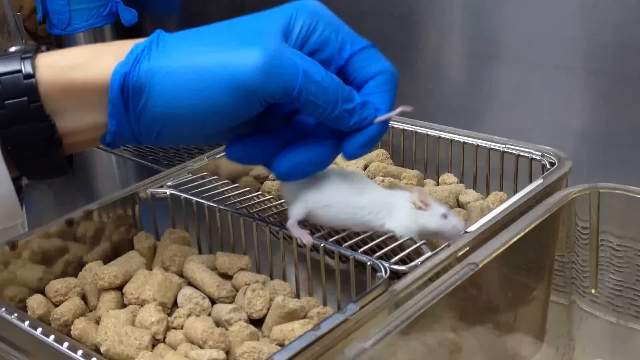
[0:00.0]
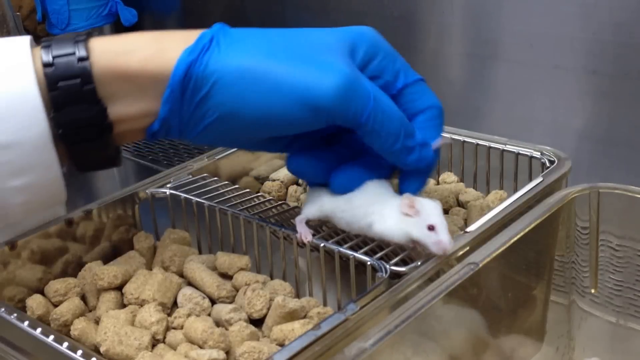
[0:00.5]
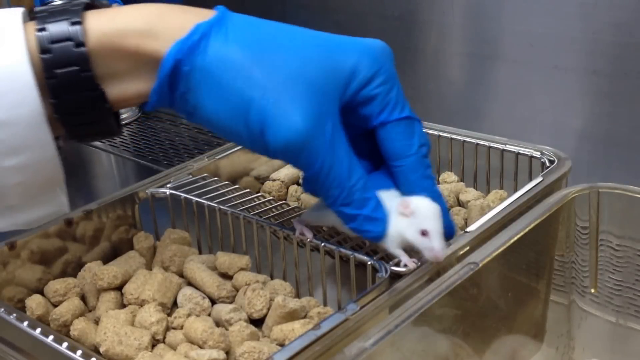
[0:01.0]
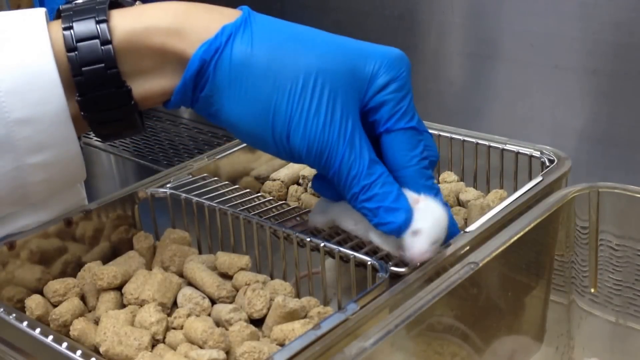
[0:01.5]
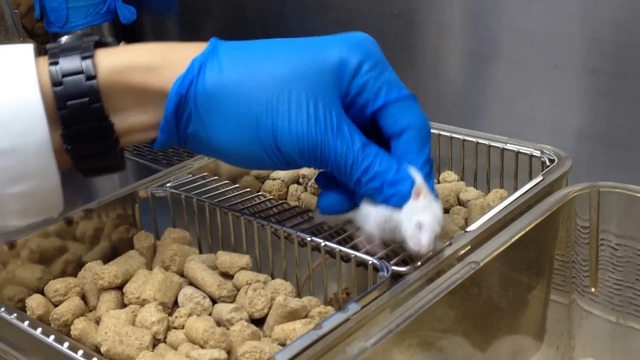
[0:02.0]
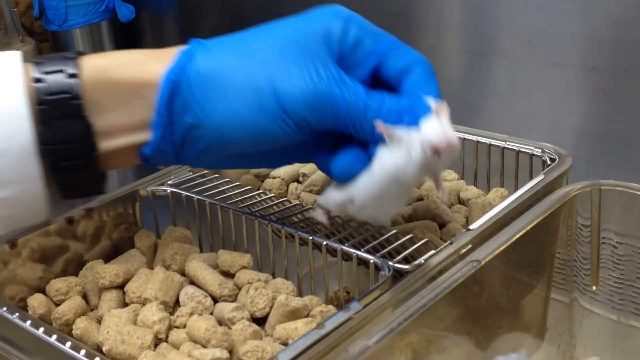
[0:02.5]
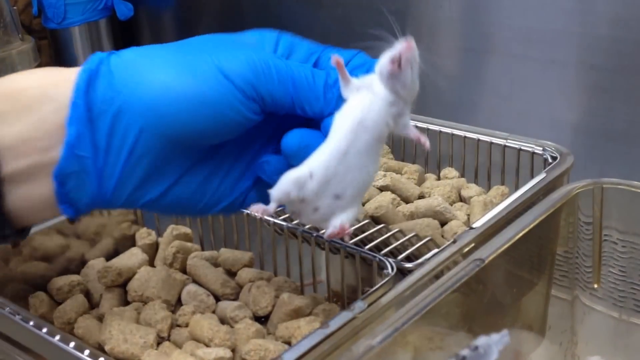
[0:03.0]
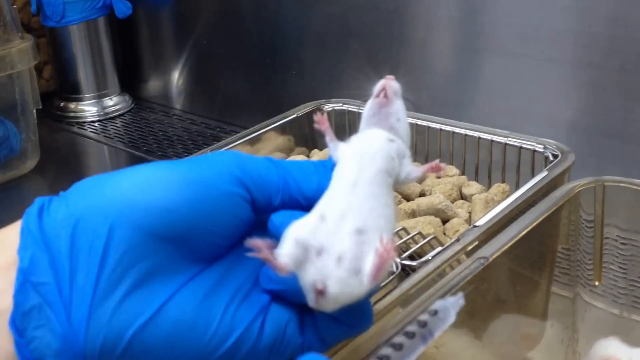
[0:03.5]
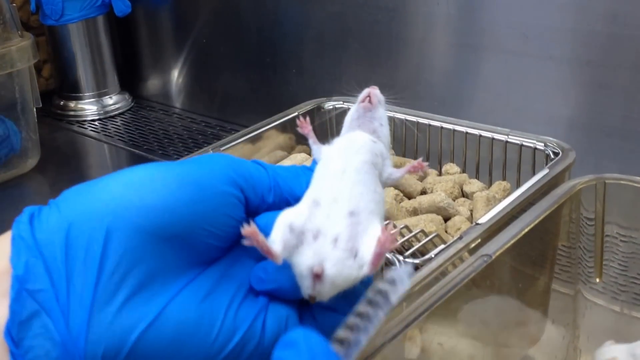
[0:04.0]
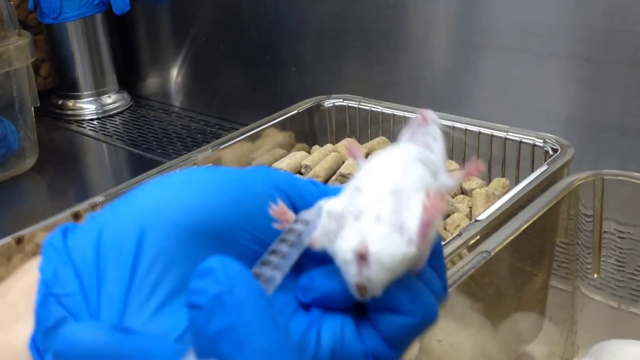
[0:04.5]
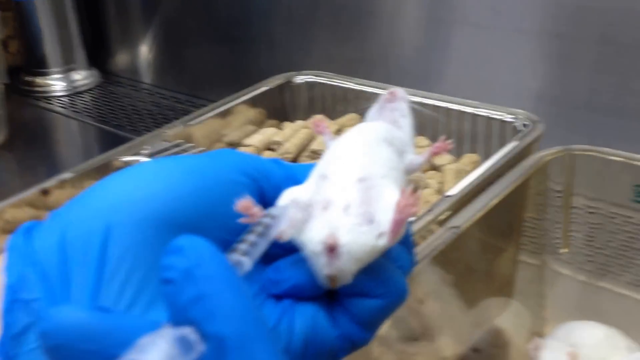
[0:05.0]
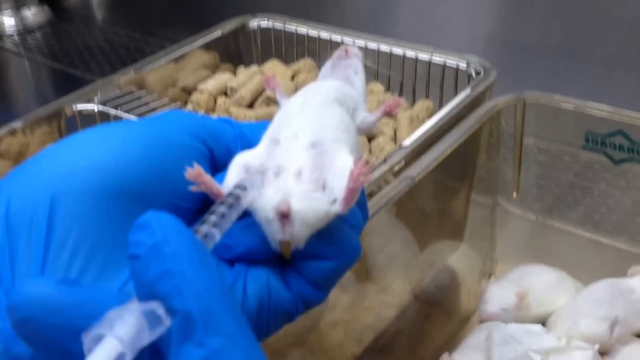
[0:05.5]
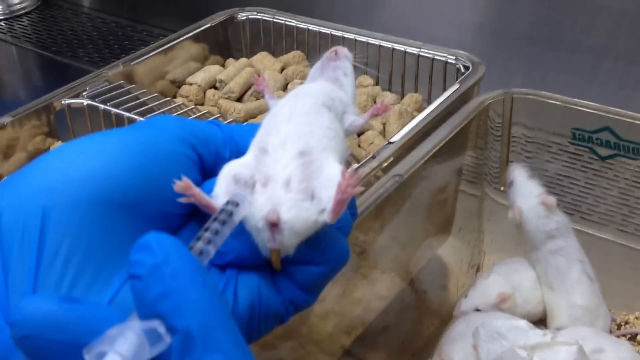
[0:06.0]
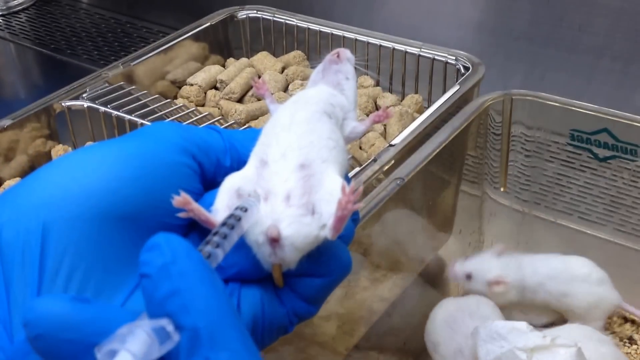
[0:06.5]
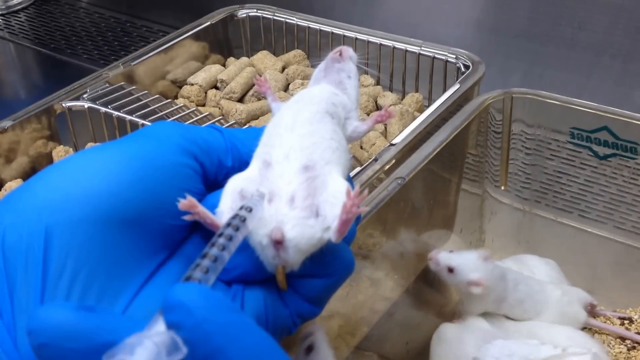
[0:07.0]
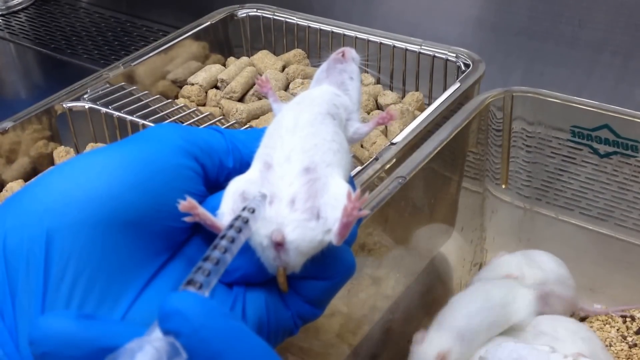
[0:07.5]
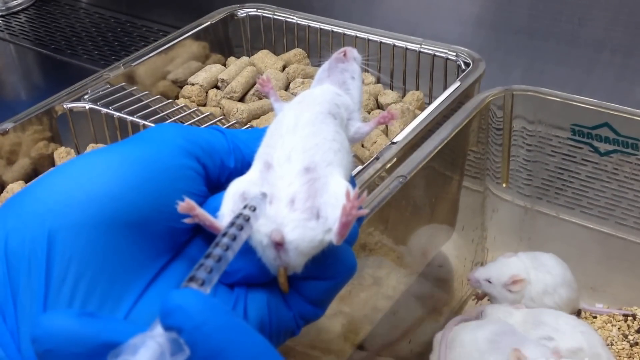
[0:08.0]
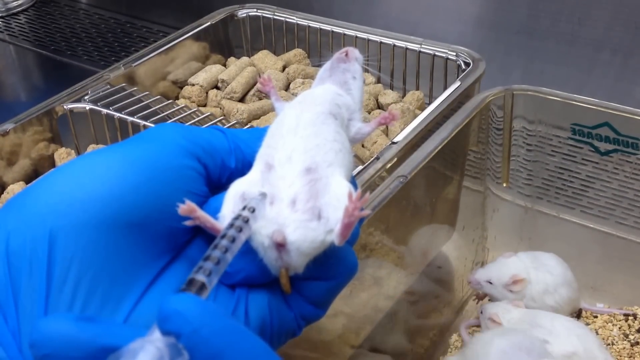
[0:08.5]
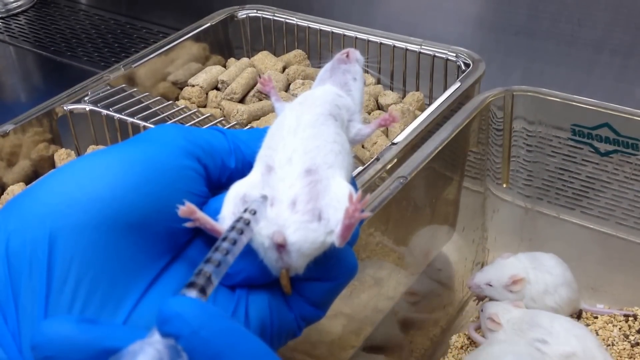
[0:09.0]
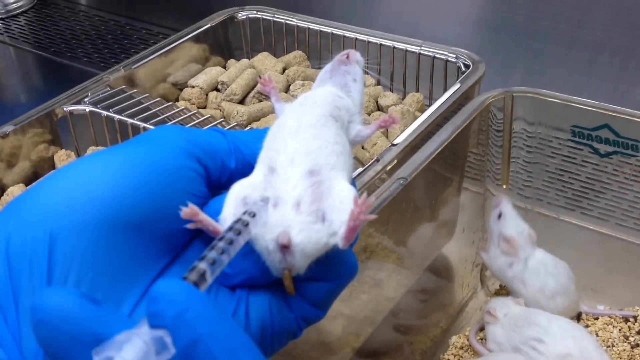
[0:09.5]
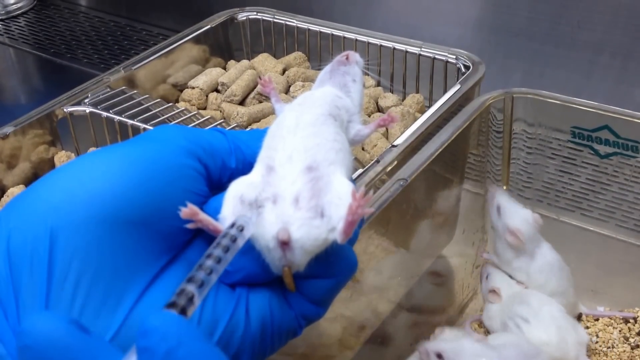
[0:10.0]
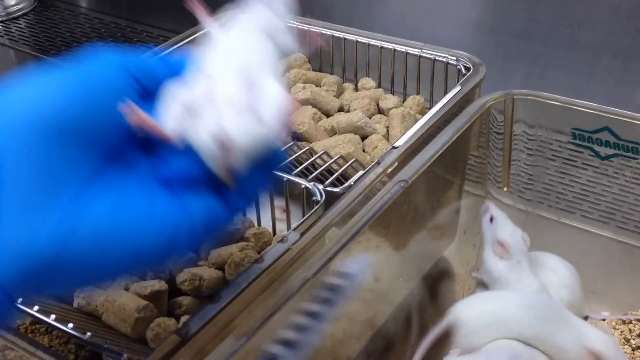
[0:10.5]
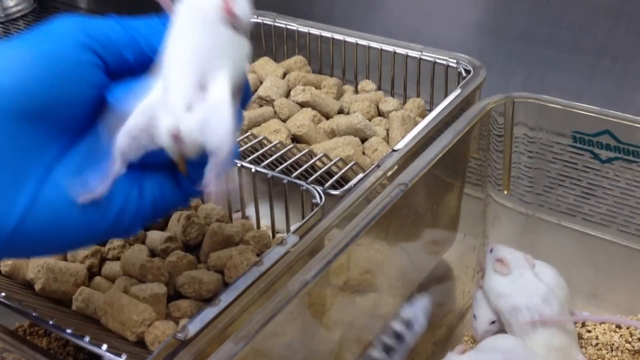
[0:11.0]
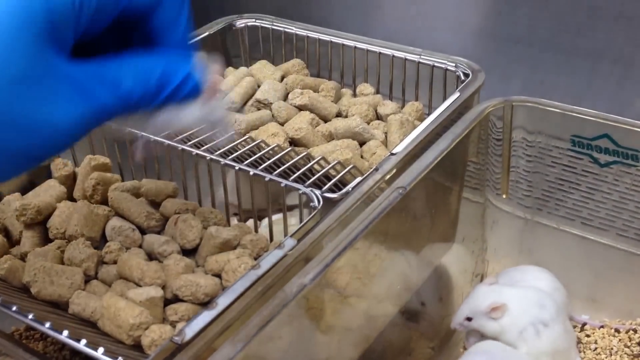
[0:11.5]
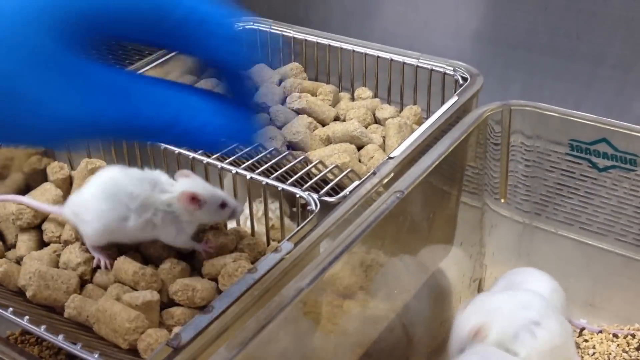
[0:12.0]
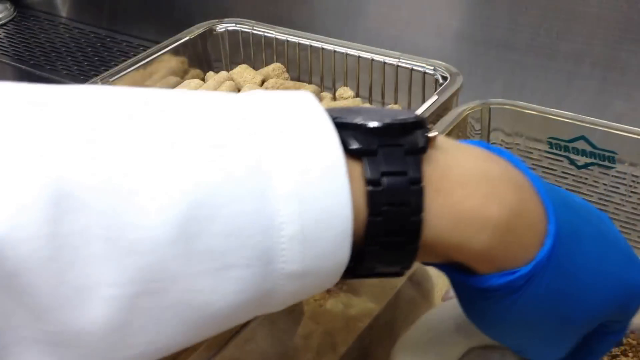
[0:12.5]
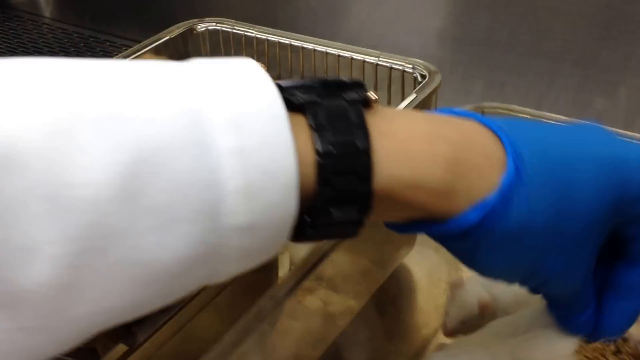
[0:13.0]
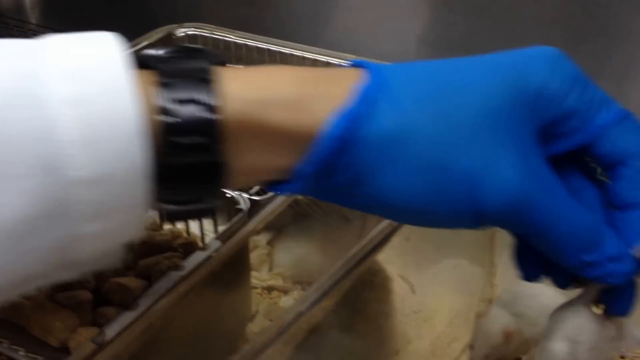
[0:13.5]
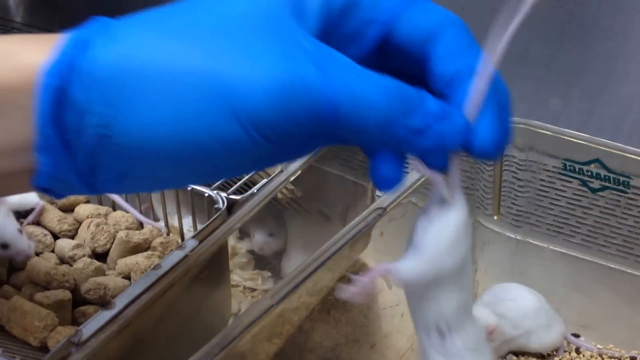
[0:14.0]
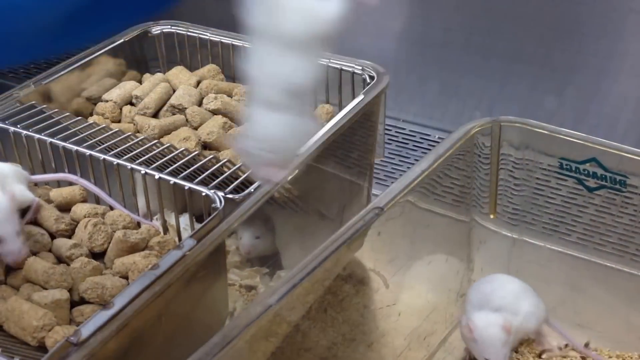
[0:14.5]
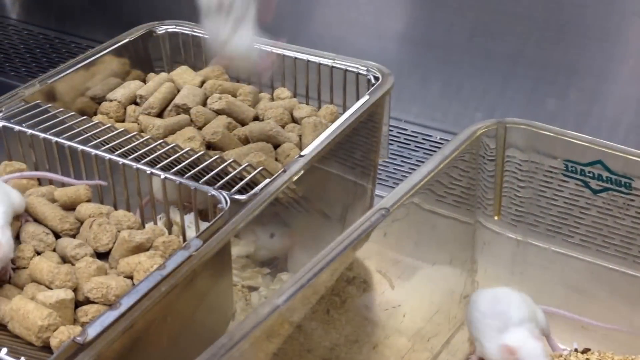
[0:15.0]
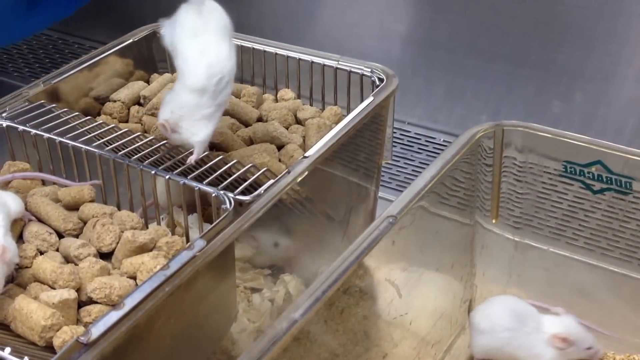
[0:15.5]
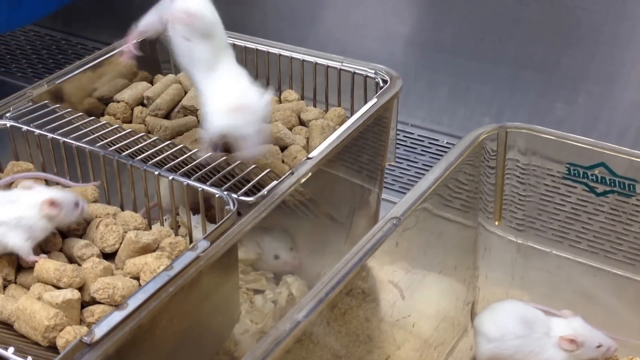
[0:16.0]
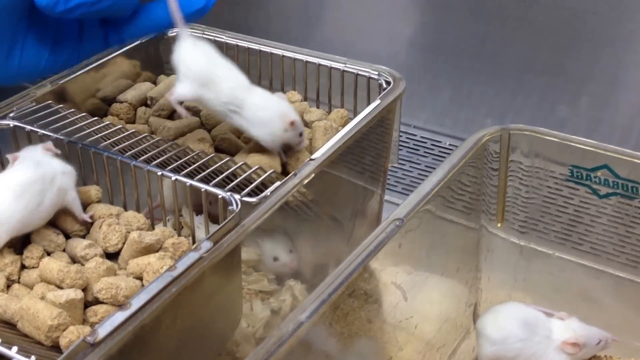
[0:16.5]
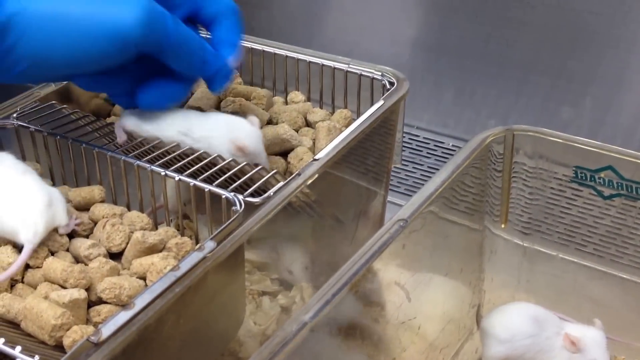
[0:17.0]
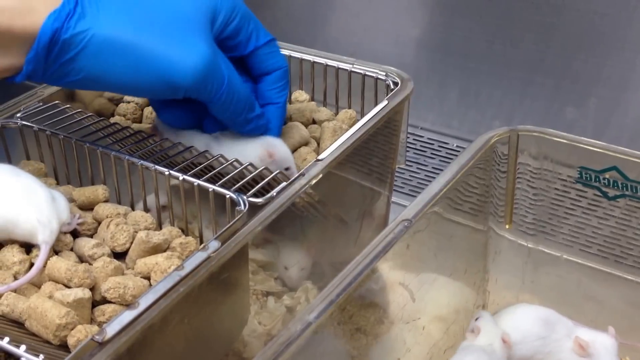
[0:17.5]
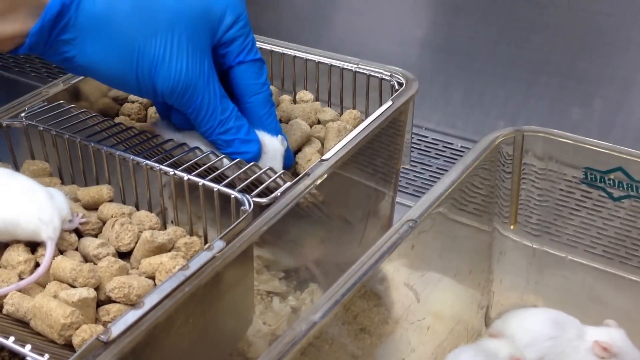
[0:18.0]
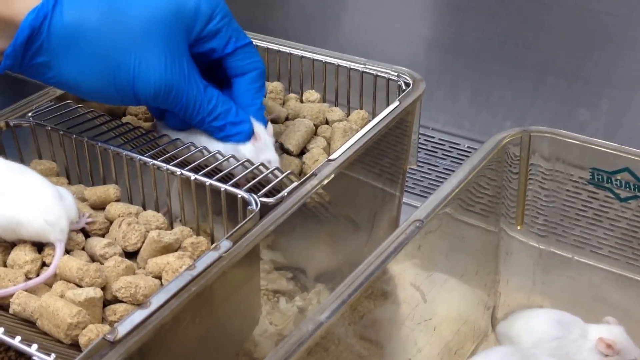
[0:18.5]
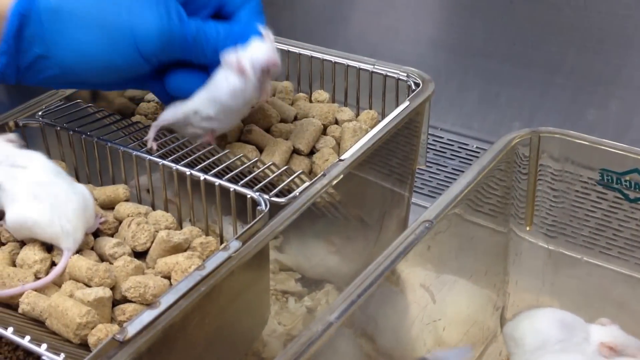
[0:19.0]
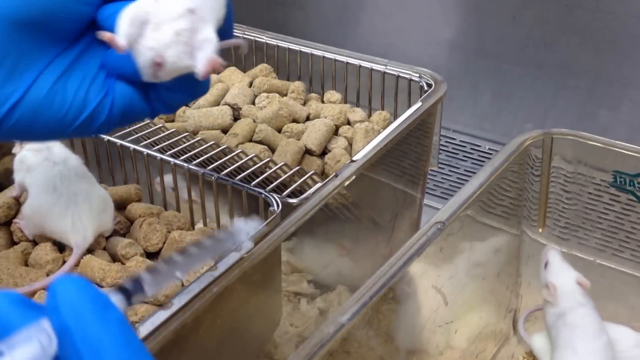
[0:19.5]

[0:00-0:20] An experimenter takes a mouse out of a tub of pellets, holds it supine, injects it with something and puts it back into another tub full of pellets or feed. The experimenter then takes a mouse from another container of mice, drops it into the tub of pellets, picks it up and is about to inject it in the same way. The experimenter wears blue latex gloves and has a big, chunky black watch on their wrist, and seems to be wearing a white lab coat. The setting is stainless steel and Perspex, clinical and scientific in appearance. The mouse seems to be encouraged to feed very briefly and is then injected with a substance from a syringe; the substance appears to be a clear liquid. For the injection, the mouse is held in the operator's gloved left hand and turned onto its back, and the syringe, held in the right hand, is inserted into its tummy while it is held supine. The operator seems practised at this, and there are lots of mice waiting. The scene appears to be a scientific experiment on mice in a lab.